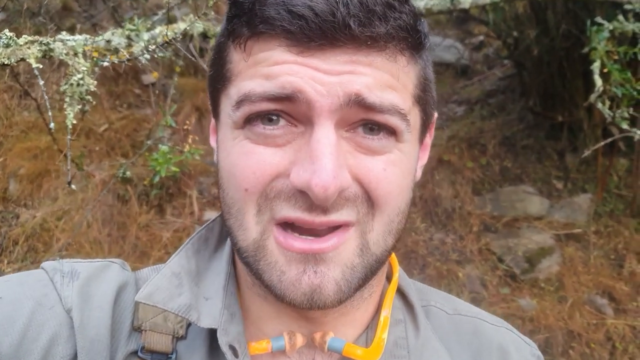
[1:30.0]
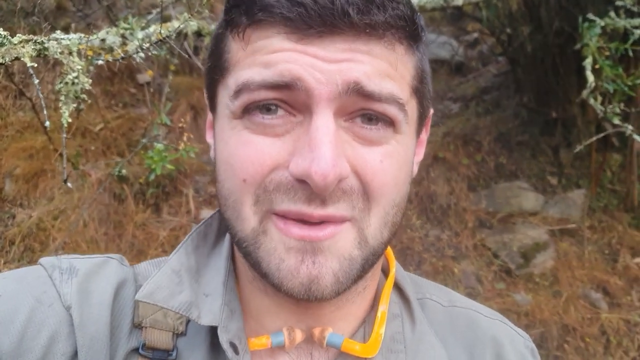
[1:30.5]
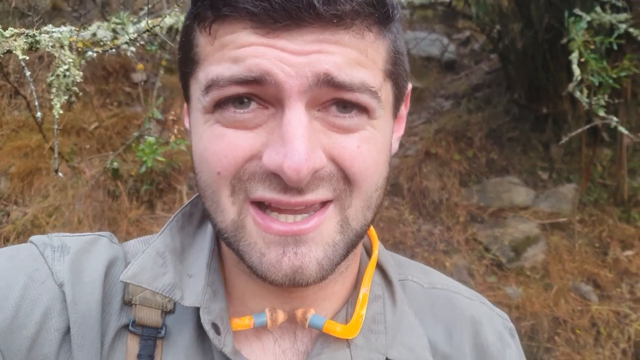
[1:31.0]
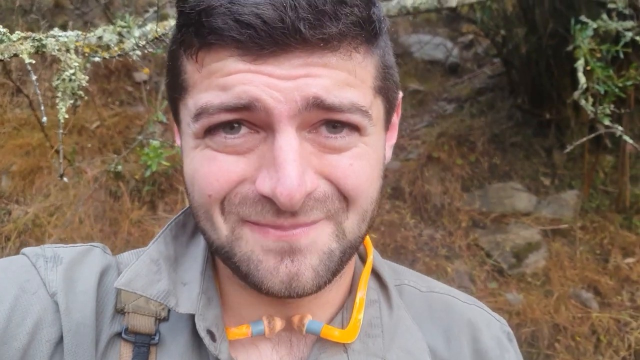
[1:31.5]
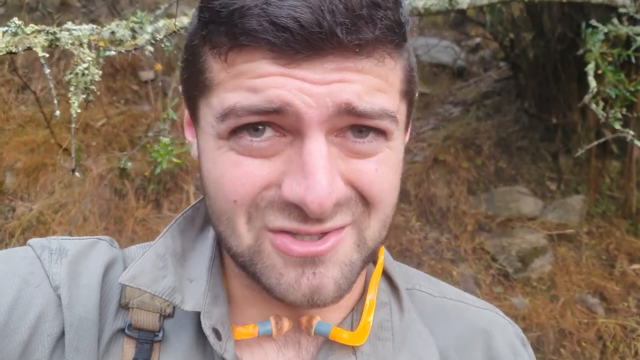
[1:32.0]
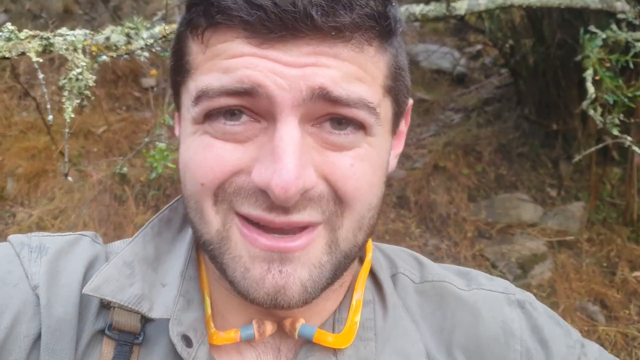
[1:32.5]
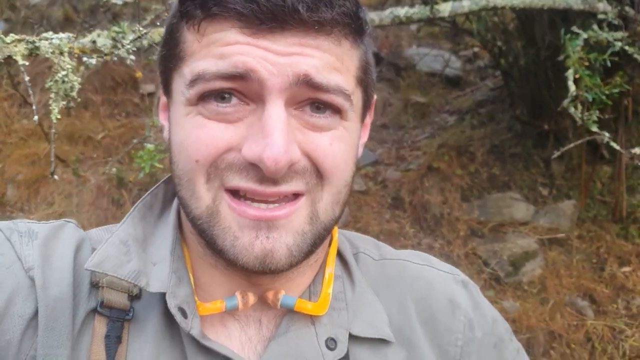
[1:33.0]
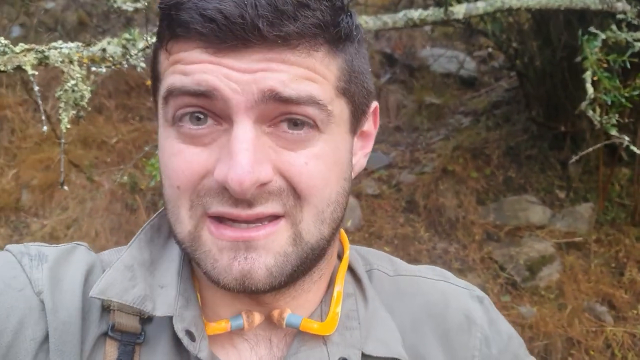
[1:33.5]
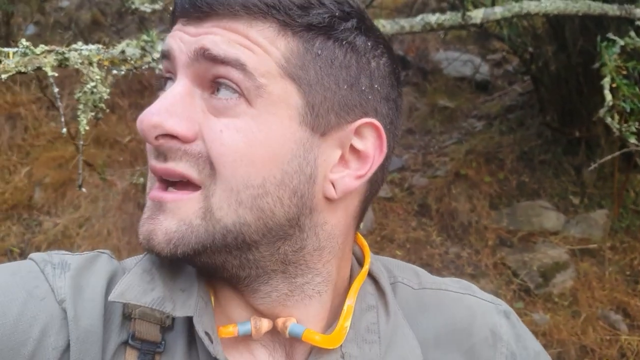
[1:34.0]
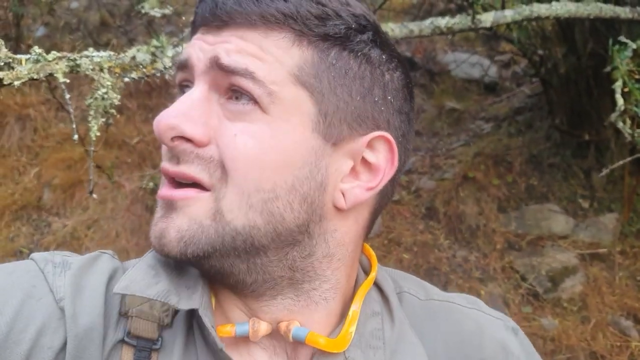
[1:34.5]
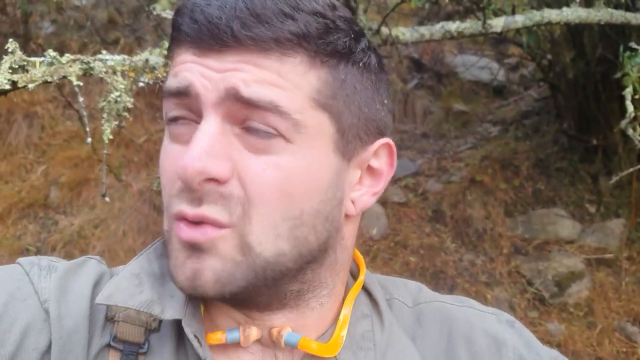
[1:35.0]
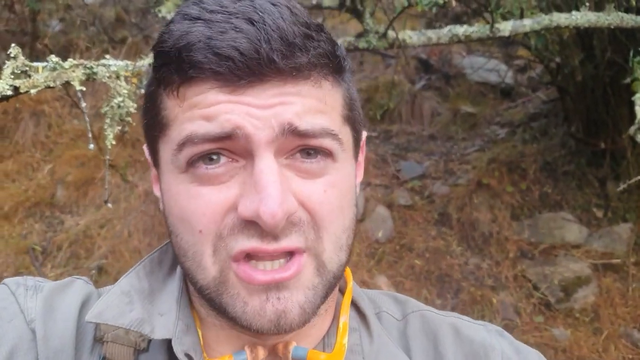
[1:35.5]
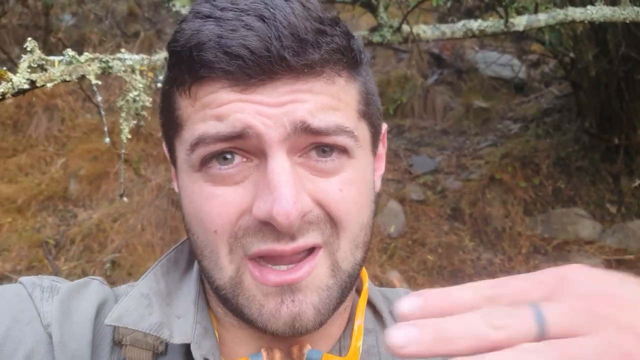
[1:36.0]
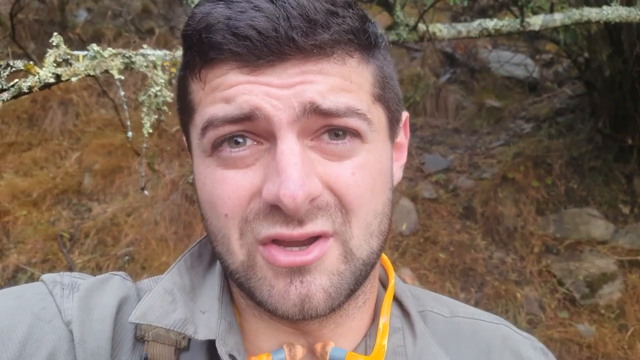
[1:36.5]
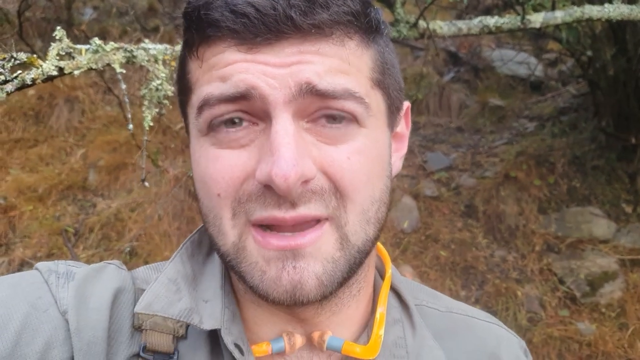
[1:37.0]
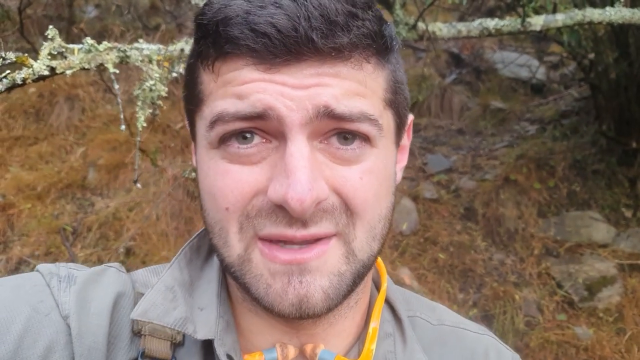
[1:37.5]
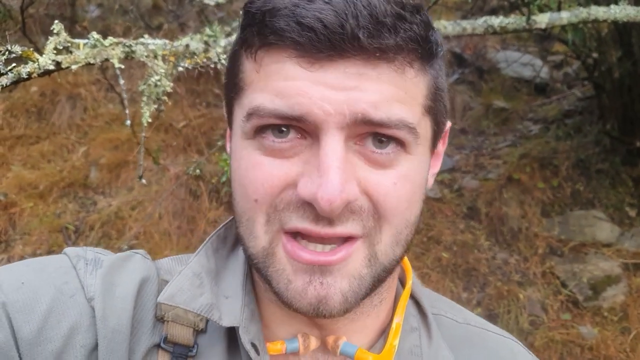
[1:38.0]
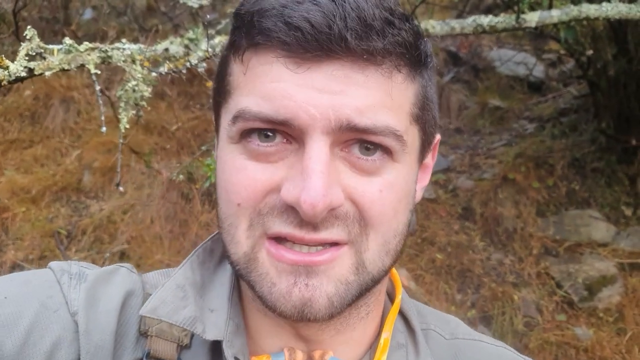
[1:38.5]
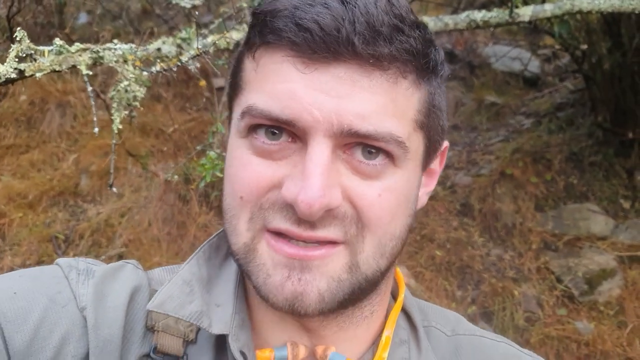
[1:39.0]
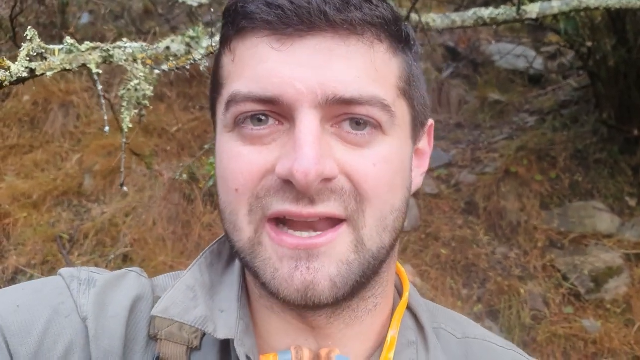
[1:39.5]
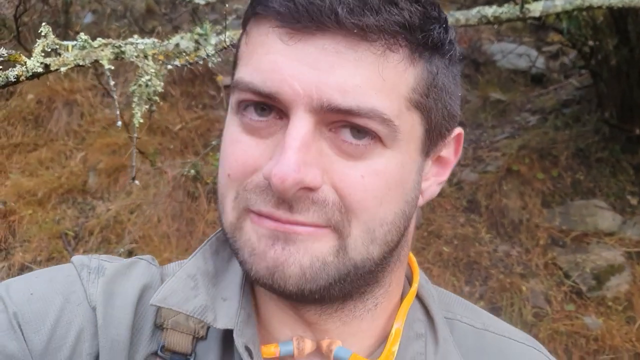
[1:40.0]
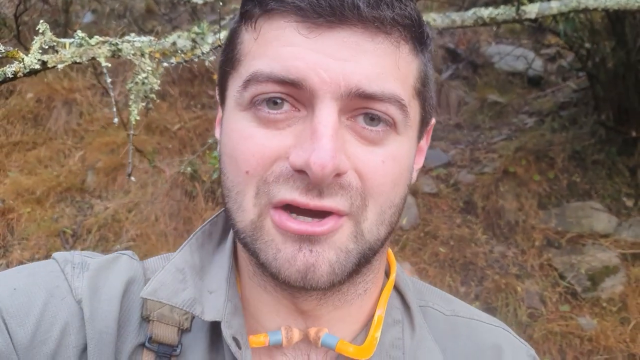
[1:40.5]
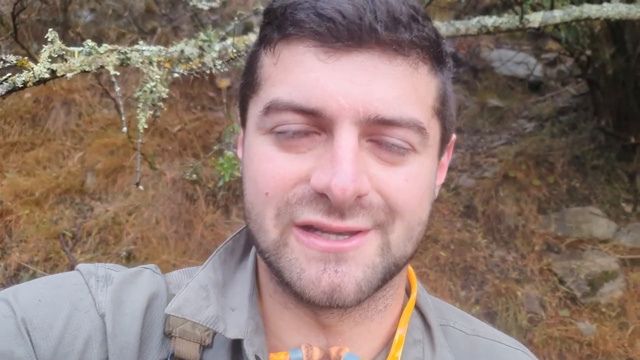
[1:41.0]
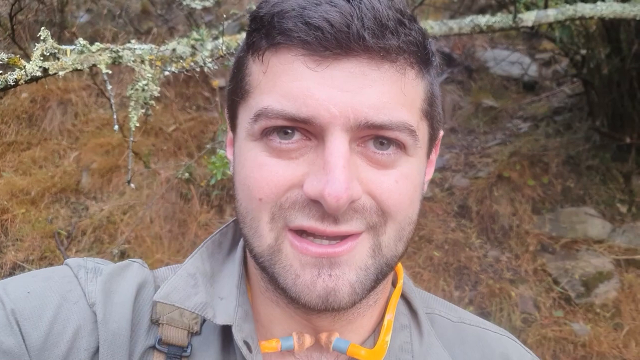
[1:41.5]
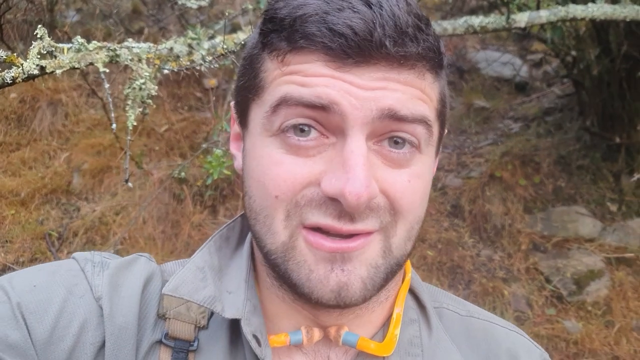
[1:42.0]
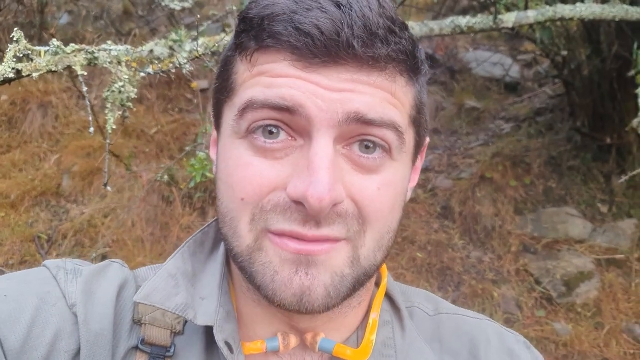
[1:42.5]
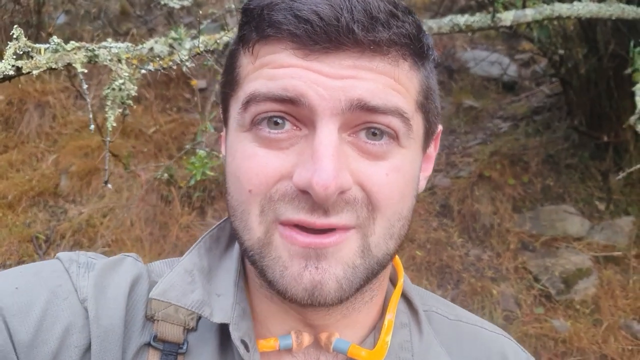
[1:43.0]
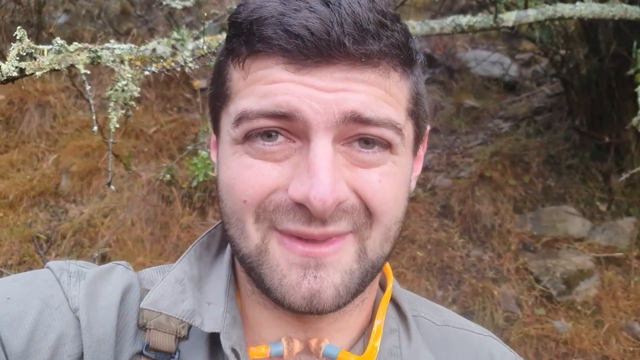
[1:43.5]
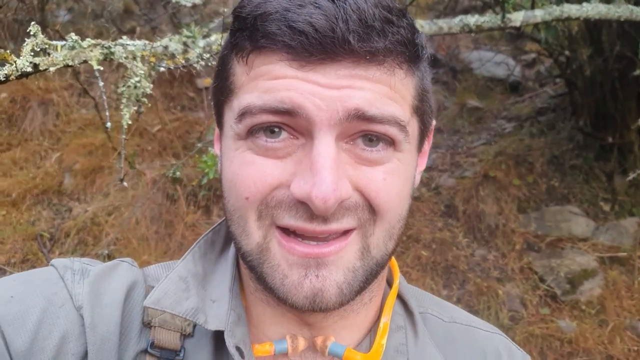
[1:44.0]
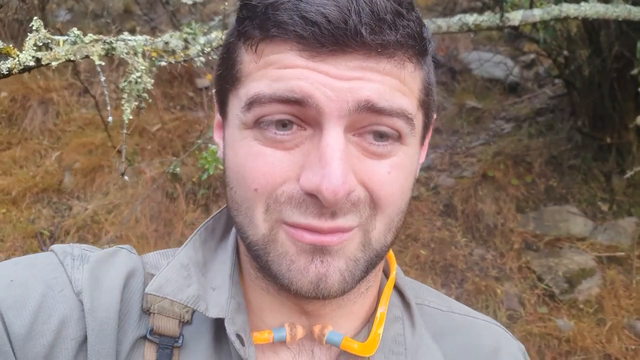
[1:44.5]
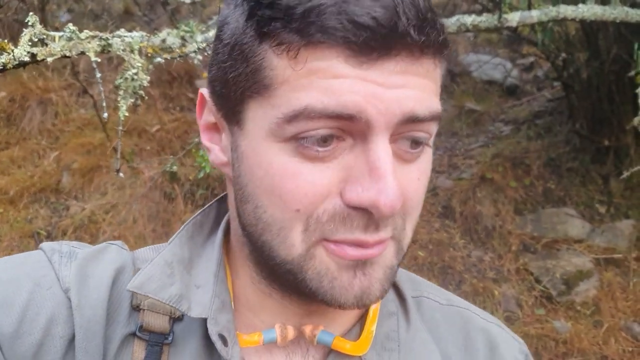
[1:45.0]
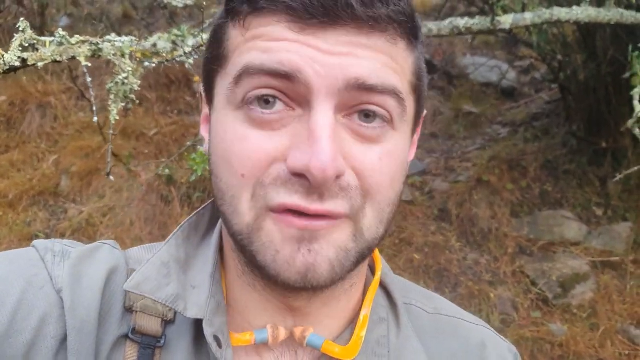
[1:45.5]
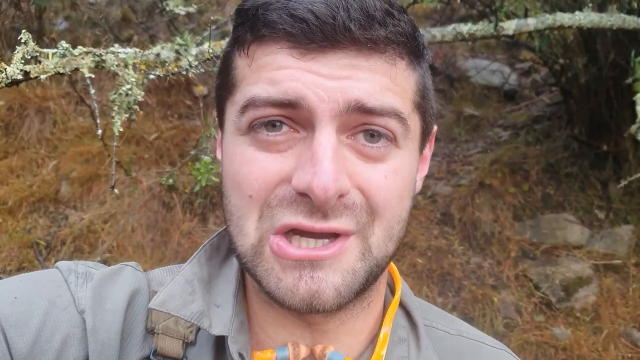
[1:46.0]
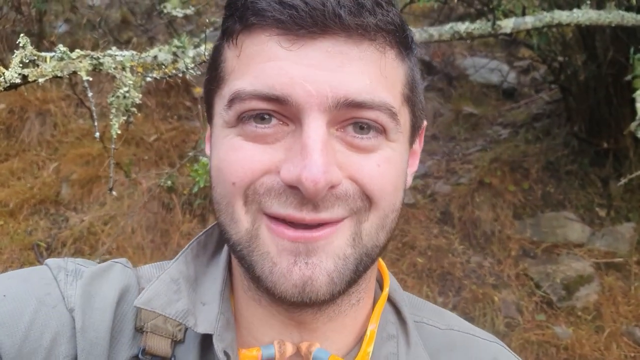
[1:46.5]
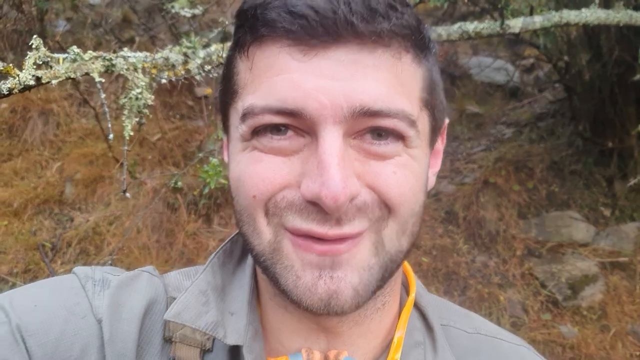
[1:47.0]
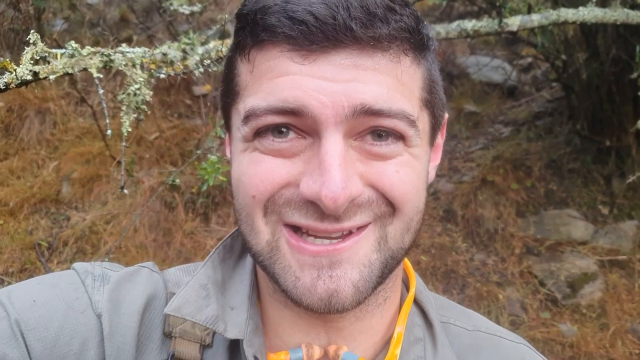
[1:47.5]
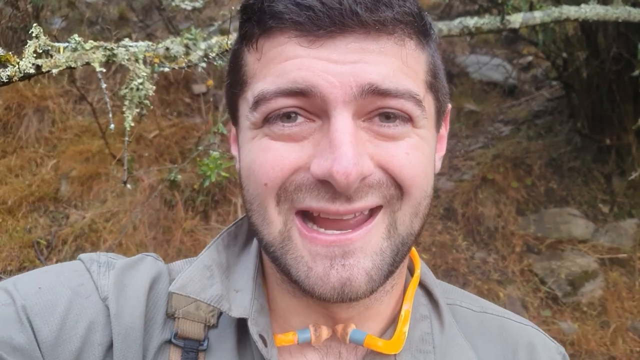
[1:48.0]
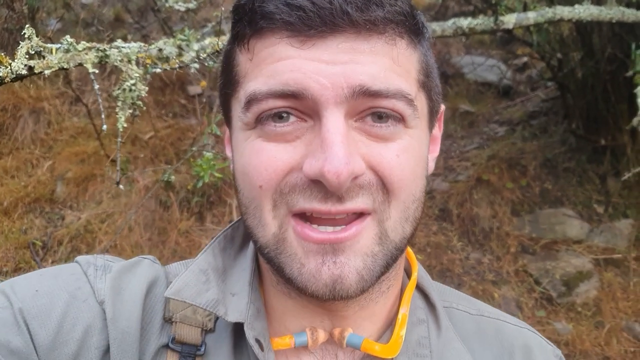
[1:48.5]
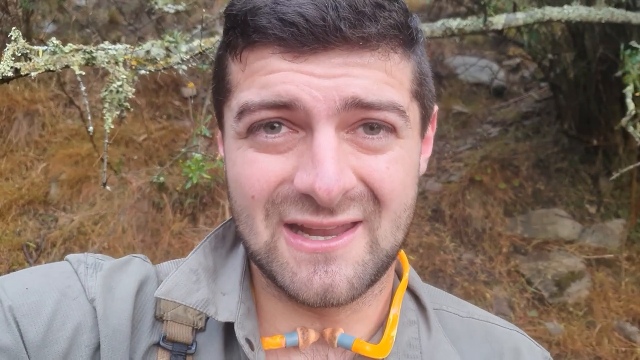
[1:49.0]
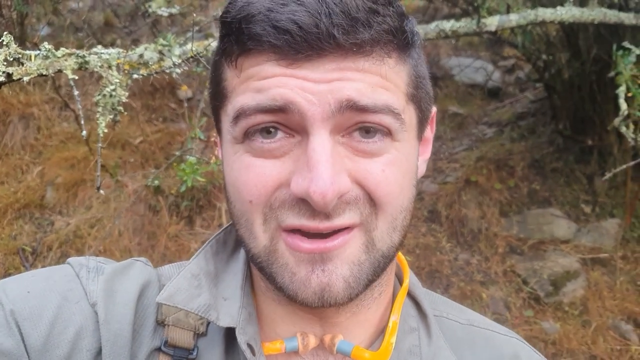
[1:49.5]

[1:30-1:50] A man talks to the camera. He wears a pale green shirt and has a strap over his right shoulder, possibly a bag strap. He has short brown hair, a stubbly beard and a slight moustache. Around his neck is a yellow plastic headpiece with what looks like ear protection at each end. He is stood amongst bushes and trees, with some small rocks and shrubs behind him. He squints slightly at the camera, furrows his brow and looks a little upset, shaking his head slightly from side to side as he talks. He looks off to the top left of the screen and moves his hand across the screen in a flat motion, looking as though he is unsure about something. He looks down to the right of the screen, then smiles.